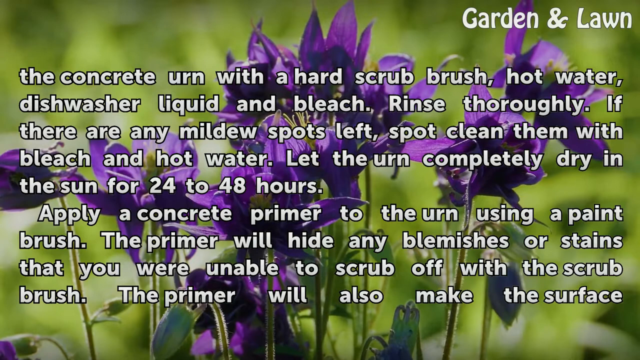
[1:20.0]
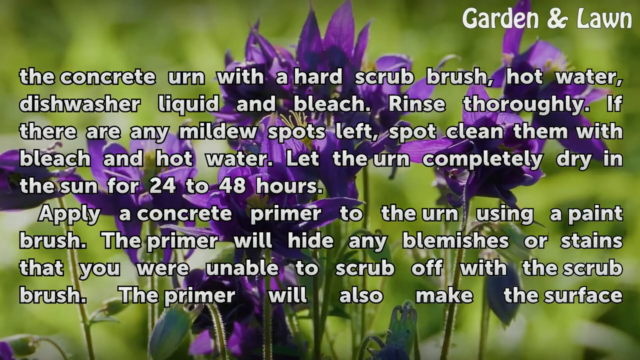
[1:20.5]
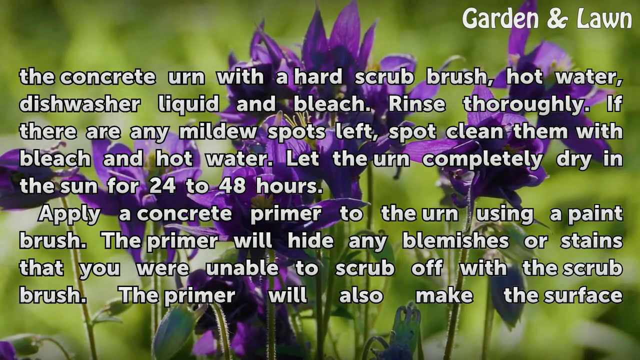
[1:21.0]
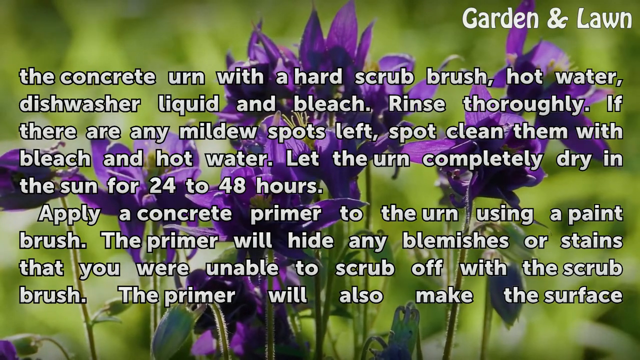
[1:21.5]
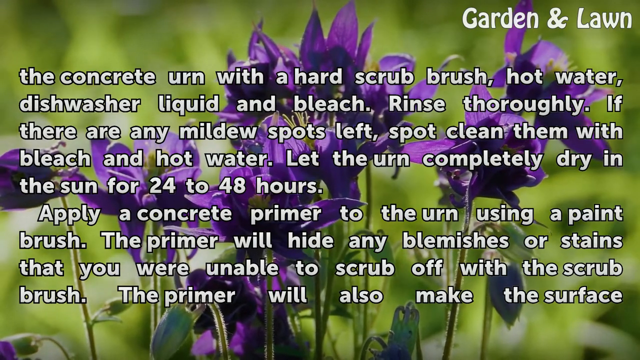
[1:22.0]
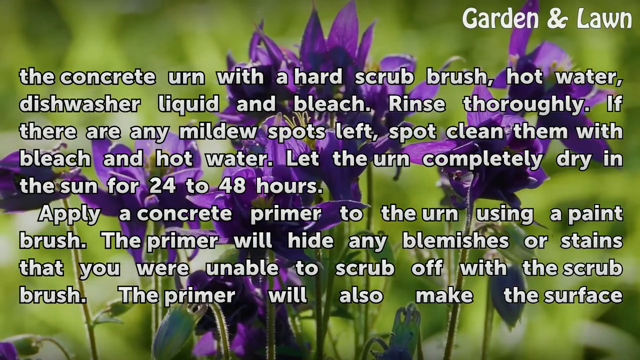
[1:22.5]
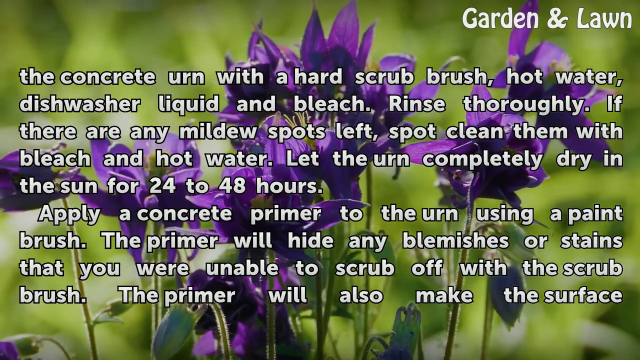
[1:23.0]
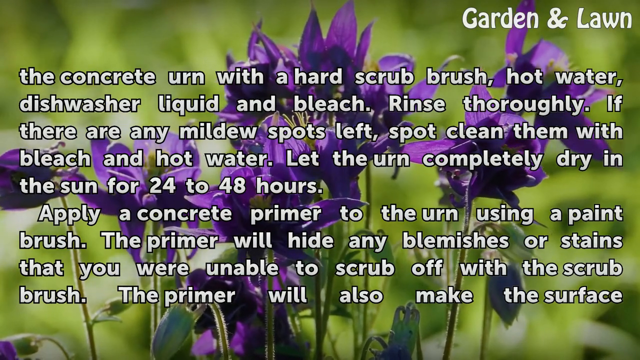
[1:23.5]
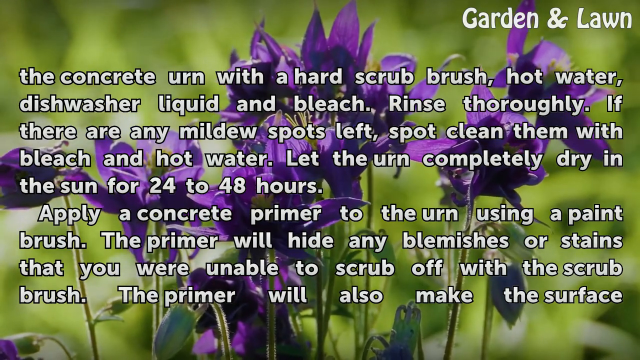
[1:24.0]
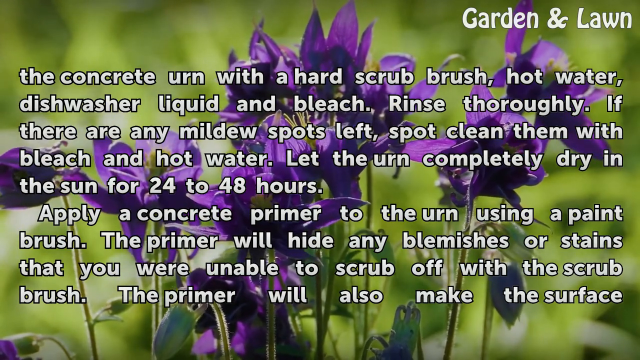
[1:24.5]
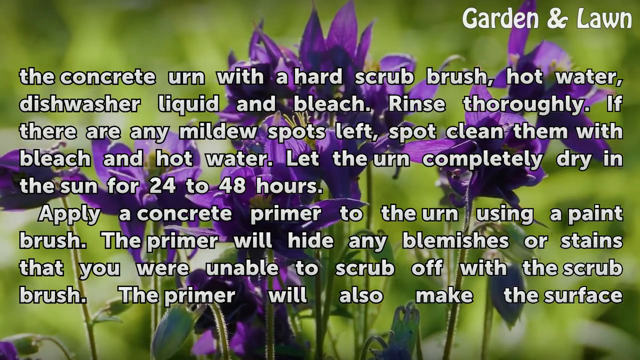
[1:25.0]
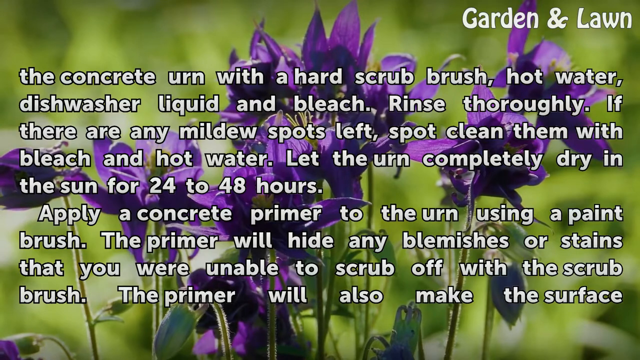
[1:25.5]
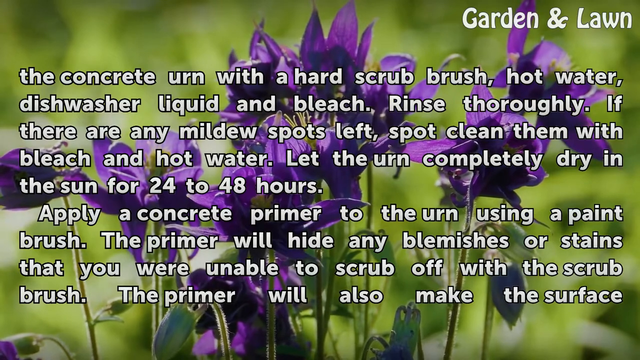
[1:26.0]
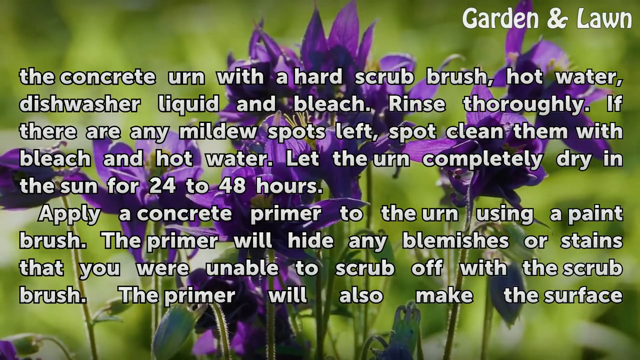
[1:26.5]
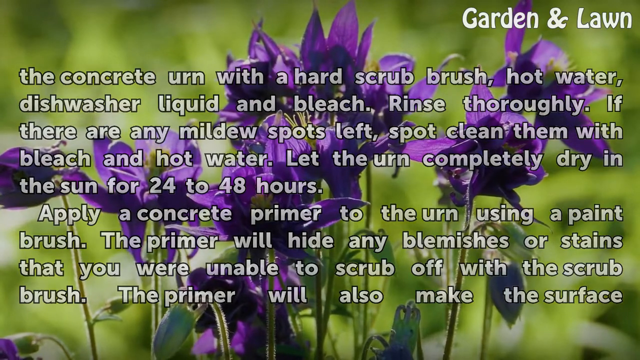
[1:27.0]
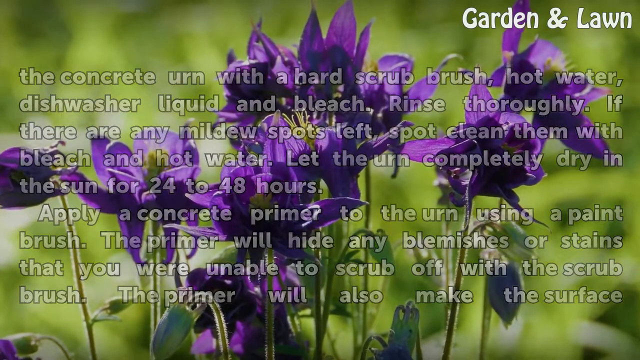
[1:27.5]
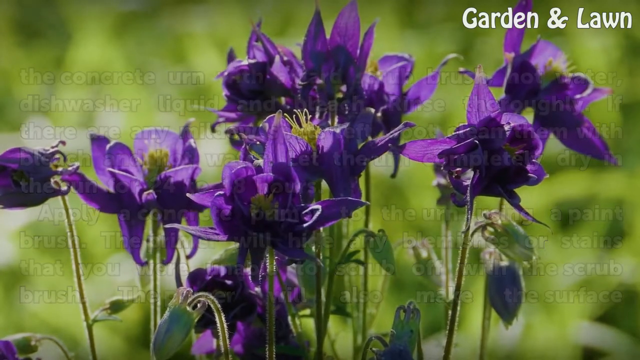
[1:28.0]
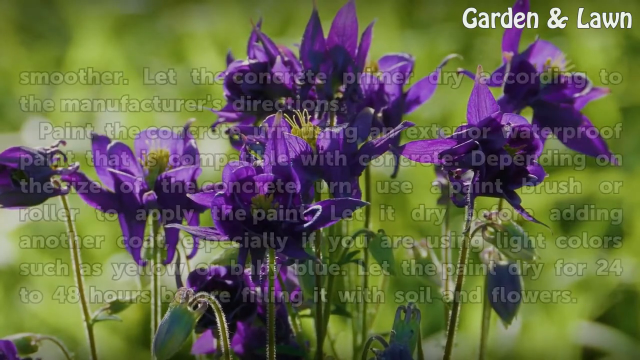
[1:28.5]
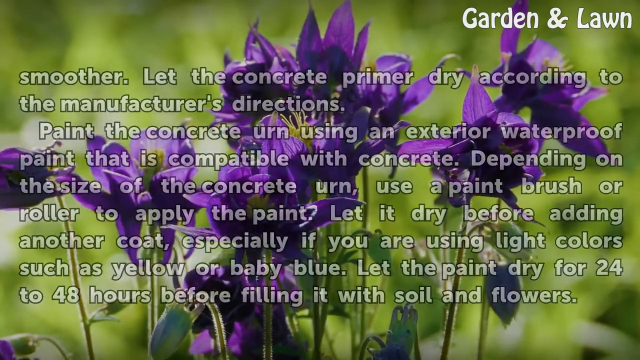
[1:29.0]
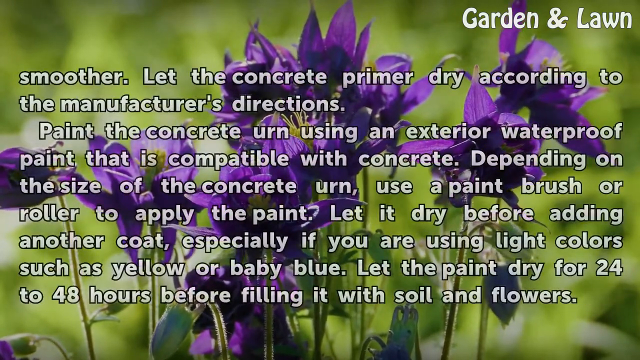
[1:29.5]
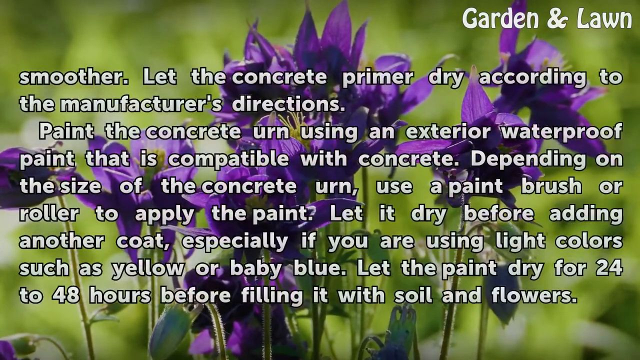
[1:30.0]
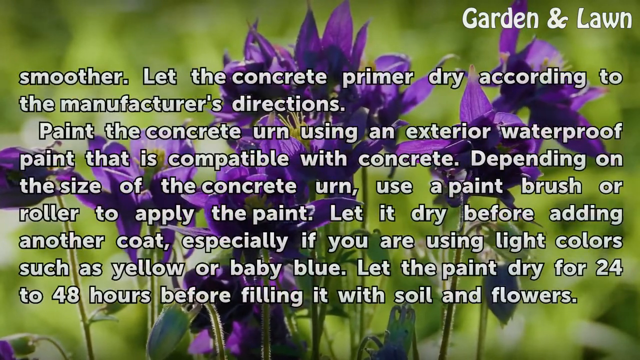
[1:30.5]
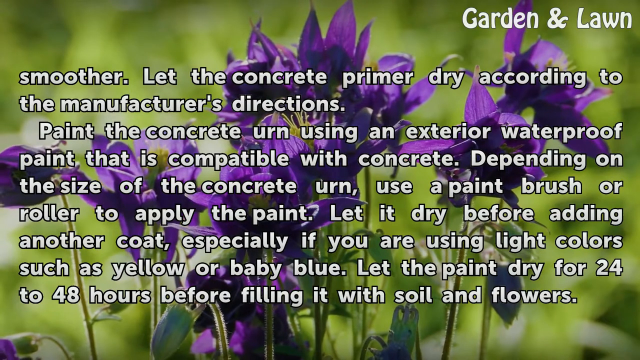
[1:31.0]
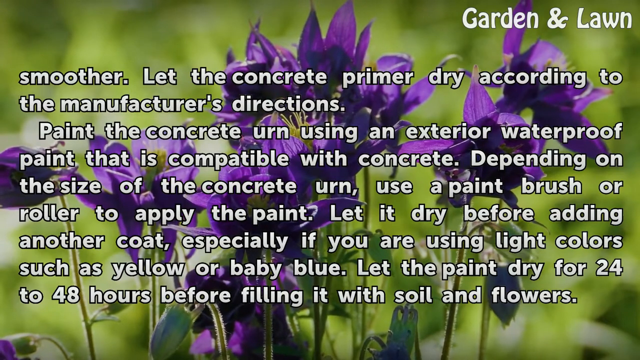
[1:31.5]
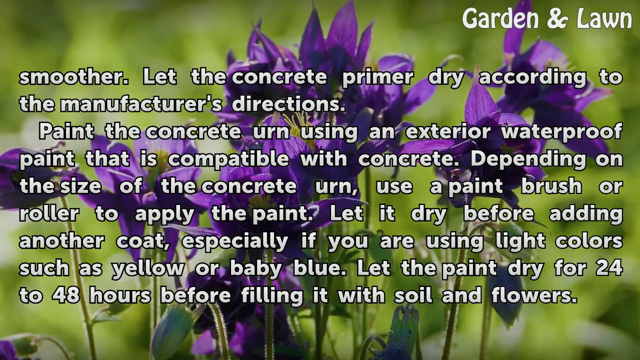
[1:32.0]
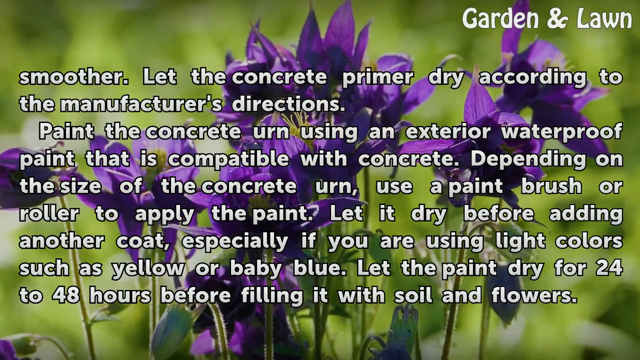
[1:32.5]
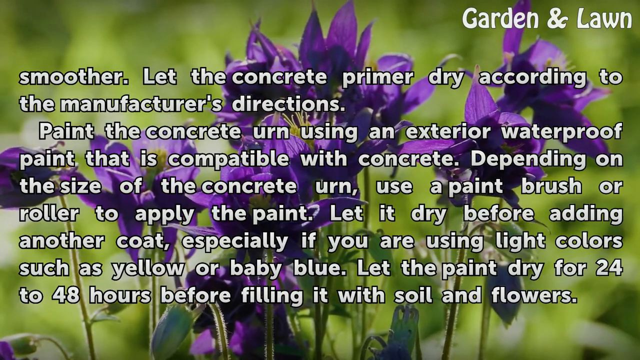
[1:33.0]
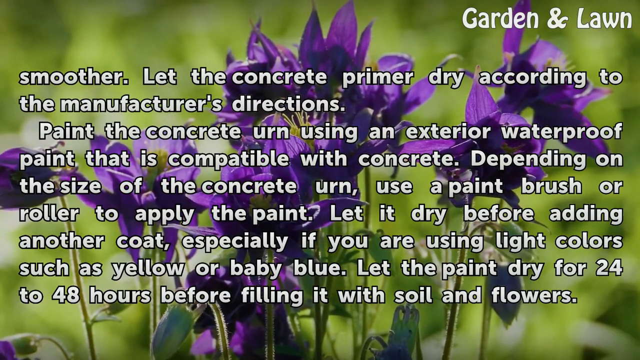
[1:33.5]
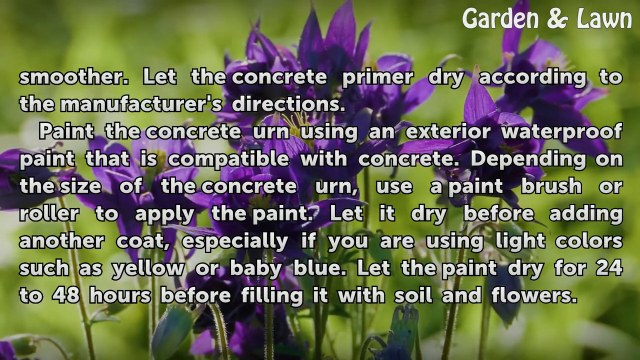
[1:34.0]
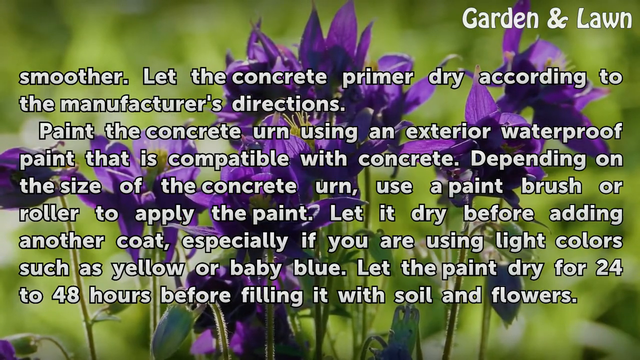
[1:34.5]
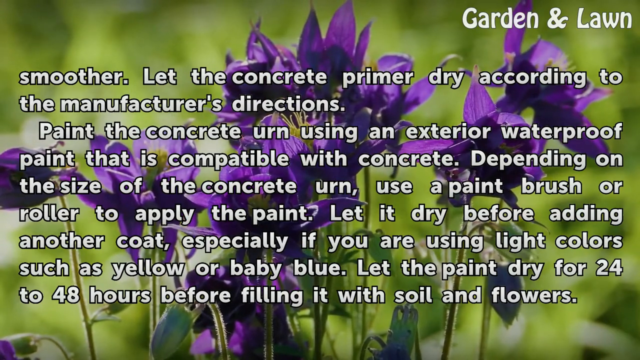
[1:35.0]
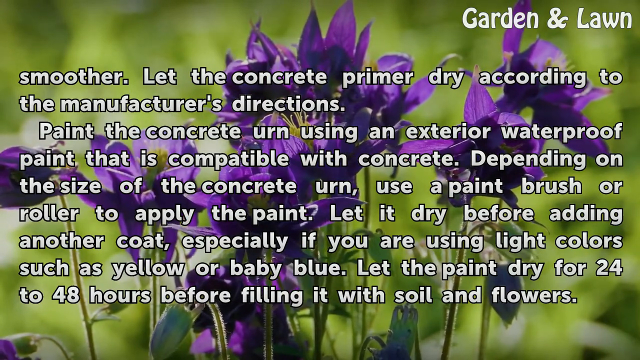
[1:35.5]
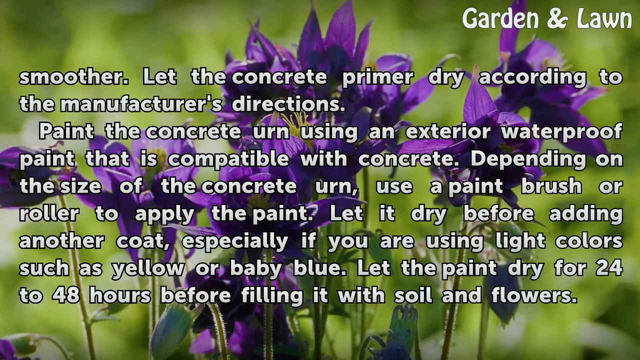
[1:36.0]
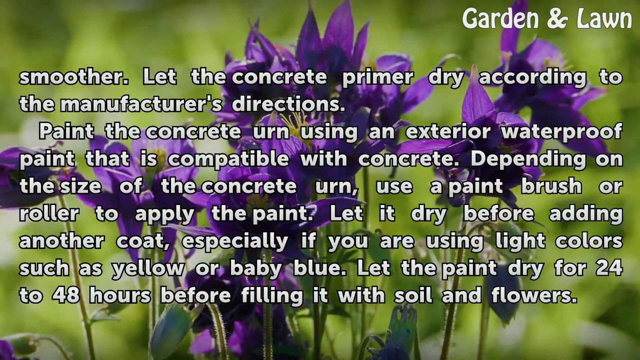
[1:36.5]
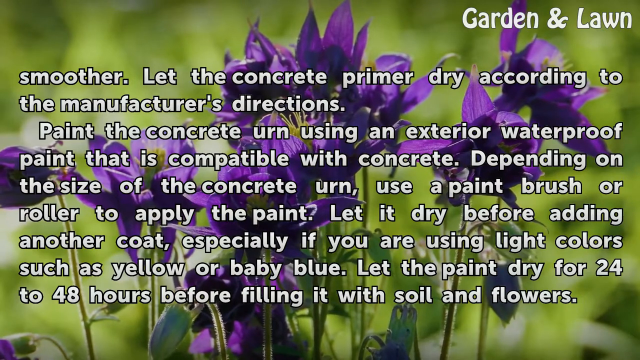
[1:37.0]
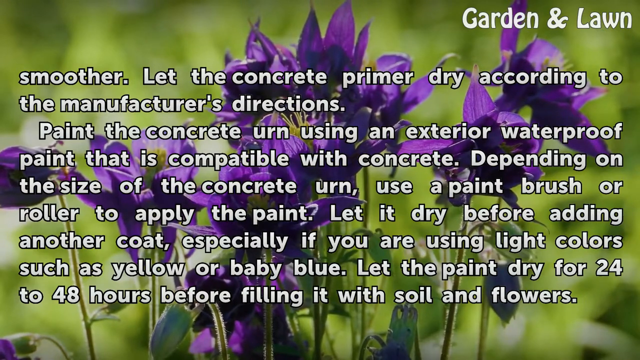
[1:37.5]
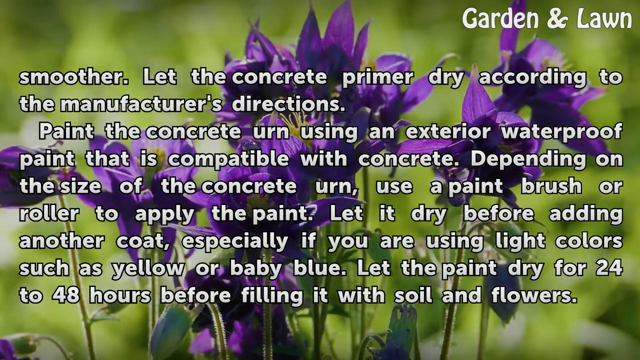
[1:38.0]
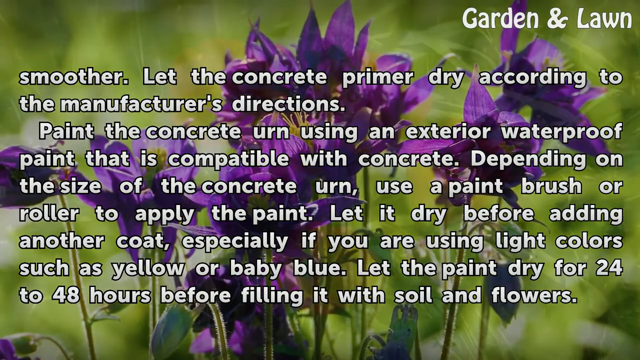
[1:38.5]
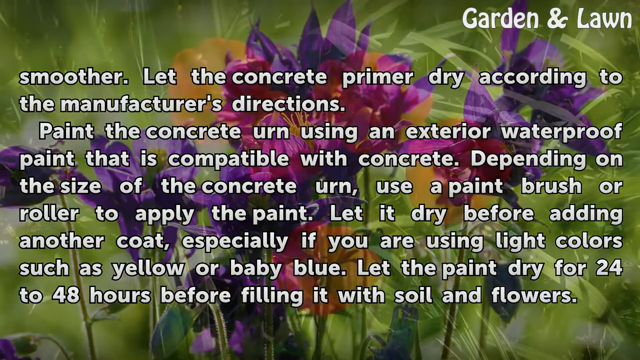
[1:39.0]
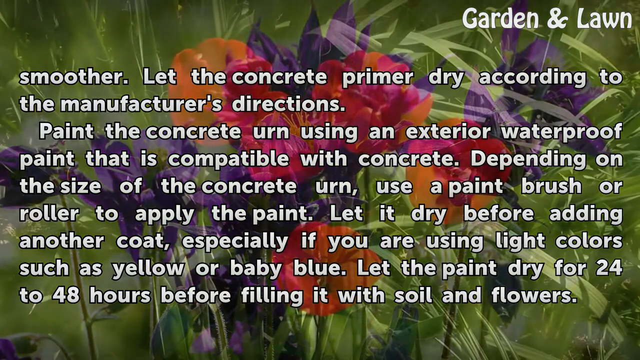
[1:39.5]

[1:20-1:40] The same text stays on screen for quite a while. Eventually, with the purple flowers in the background, new step-by-step text appears: "let the concrete primer dry according to the manufacturer's directions. Paint the concrete urn using exterior waterproof paint that is compatible with the concrete. Depending on the size of the concrete urn, use a paintbrush or roller to apply the paint. Let it dry before adding another coat, especially if you're using light colors such as yellow or baby blue. Let the paint dry for 24 to 48 hours before filling it with soil and flowers." Later the background transitions to another group of flowers; only their red color is visible, and the species and their look are not fully shown, almost like a sneak peek.